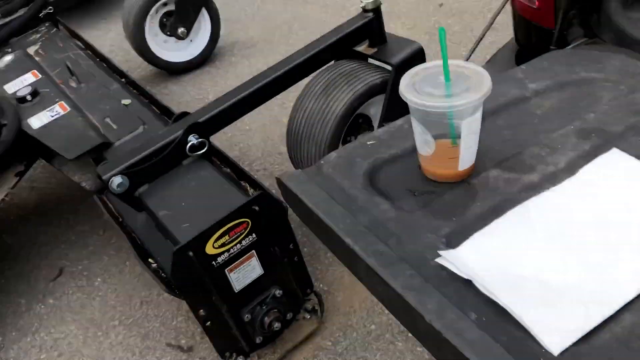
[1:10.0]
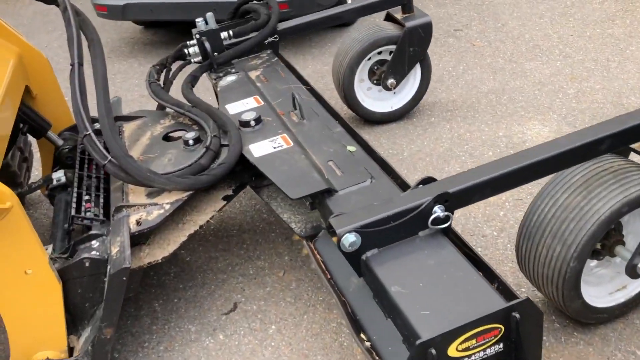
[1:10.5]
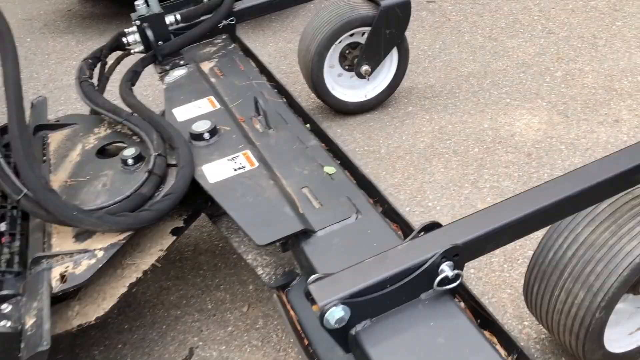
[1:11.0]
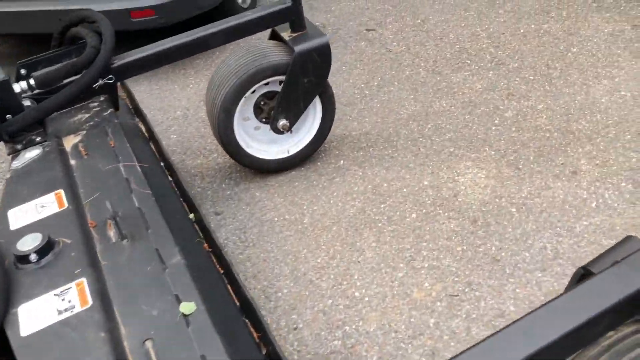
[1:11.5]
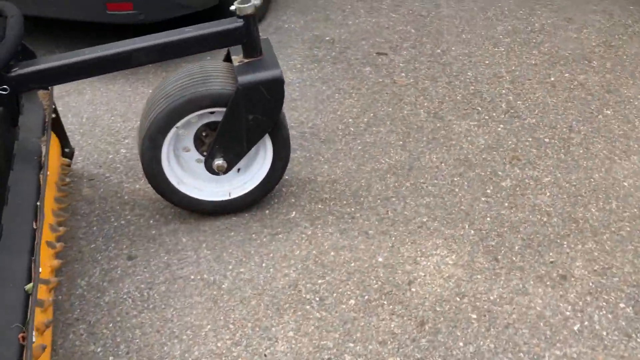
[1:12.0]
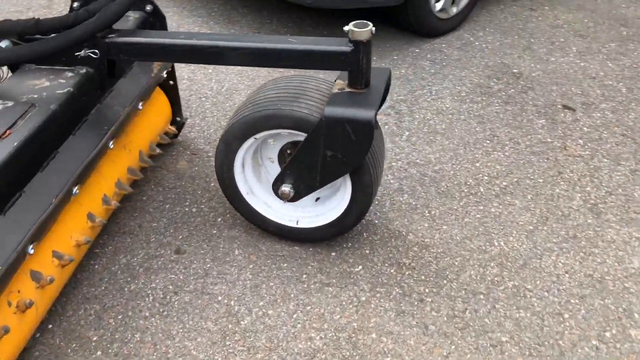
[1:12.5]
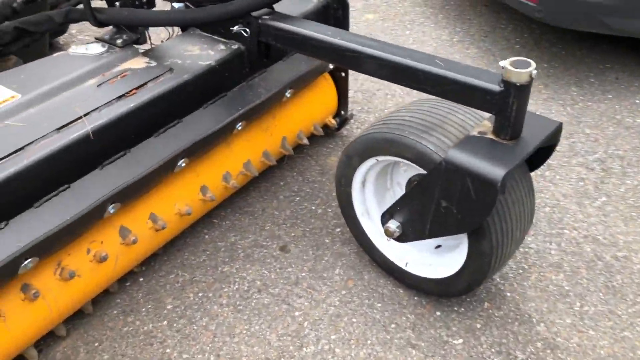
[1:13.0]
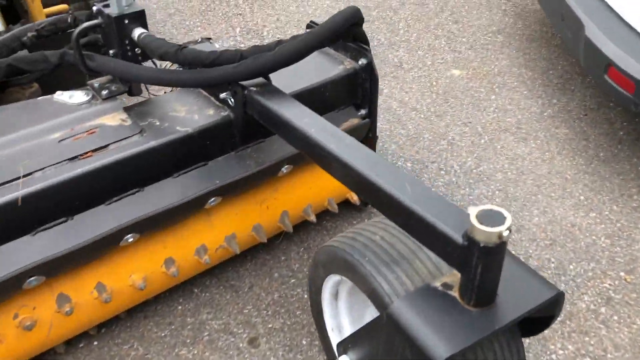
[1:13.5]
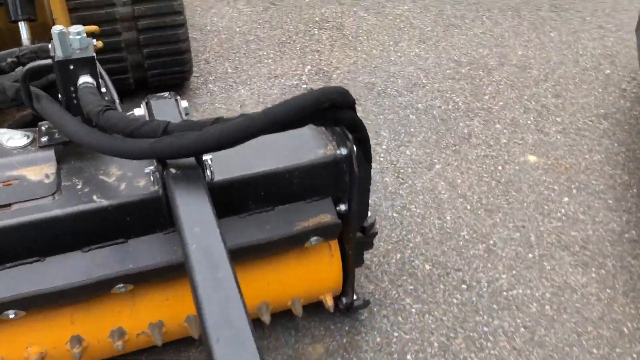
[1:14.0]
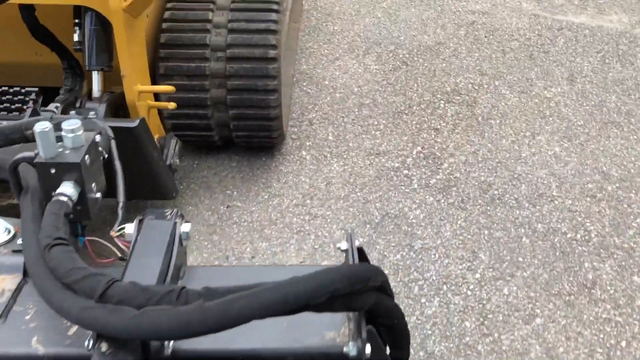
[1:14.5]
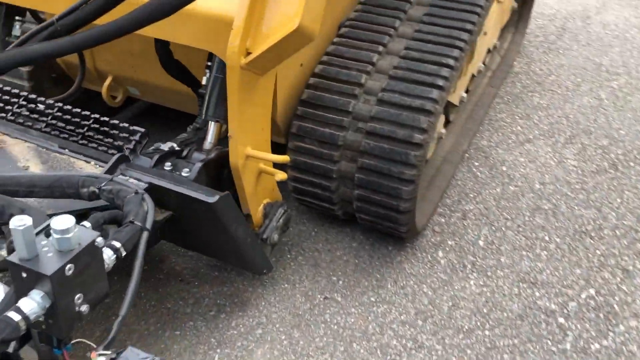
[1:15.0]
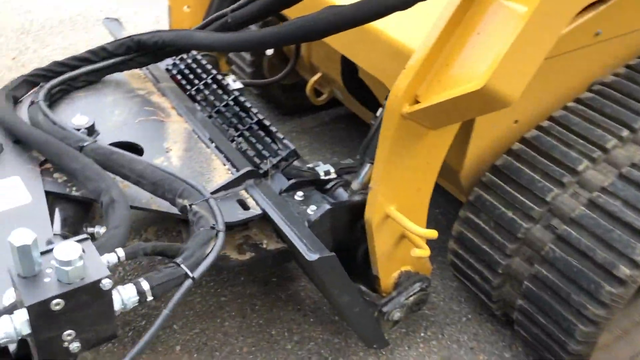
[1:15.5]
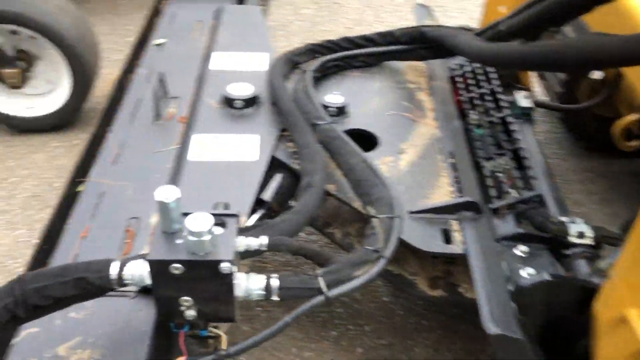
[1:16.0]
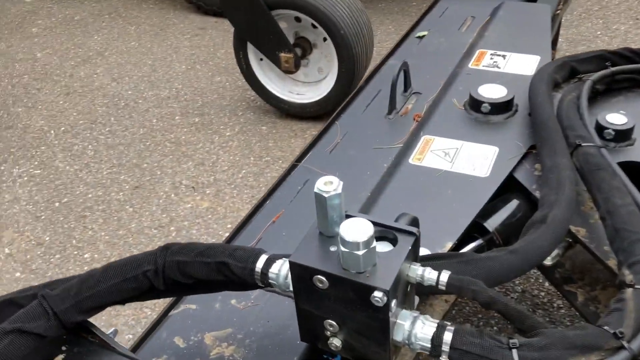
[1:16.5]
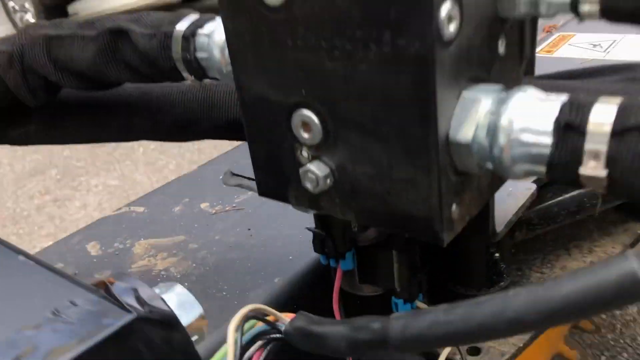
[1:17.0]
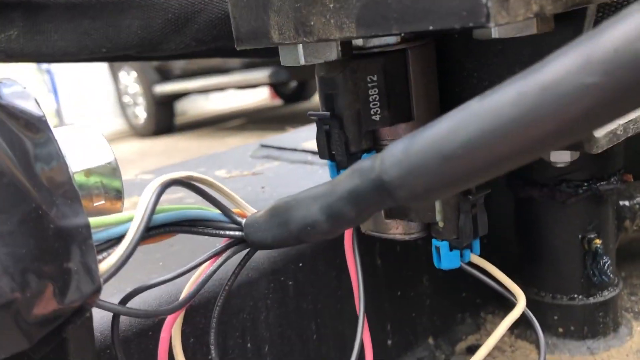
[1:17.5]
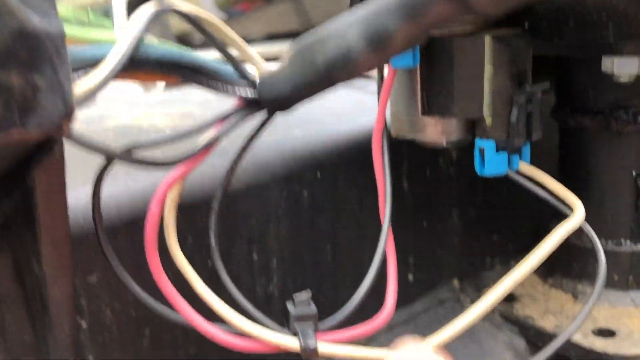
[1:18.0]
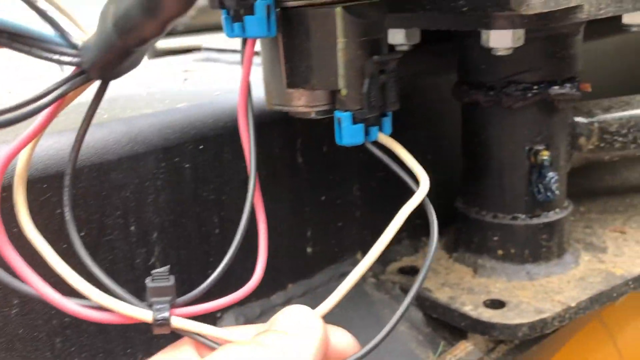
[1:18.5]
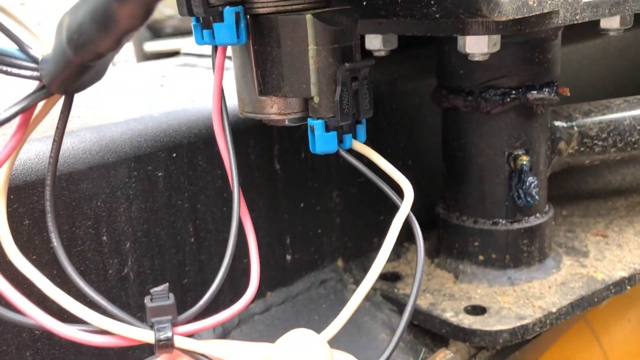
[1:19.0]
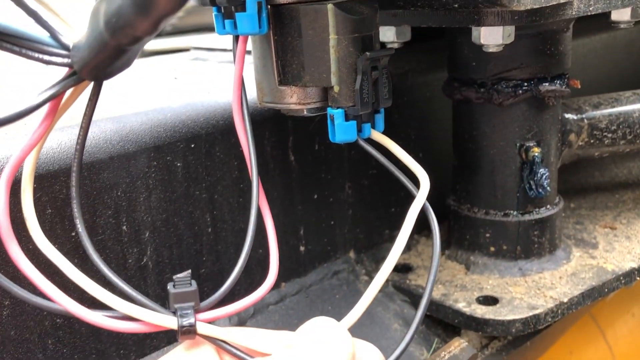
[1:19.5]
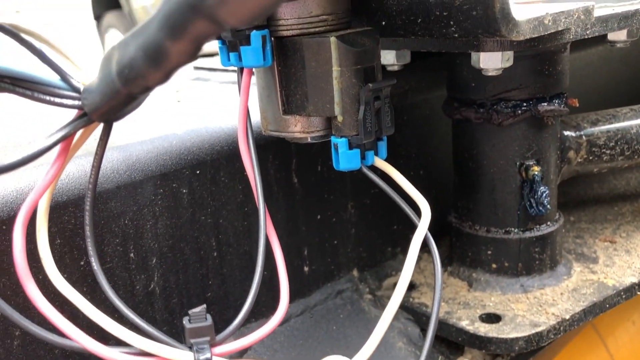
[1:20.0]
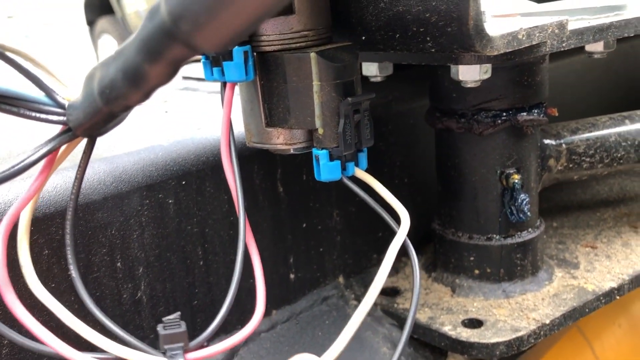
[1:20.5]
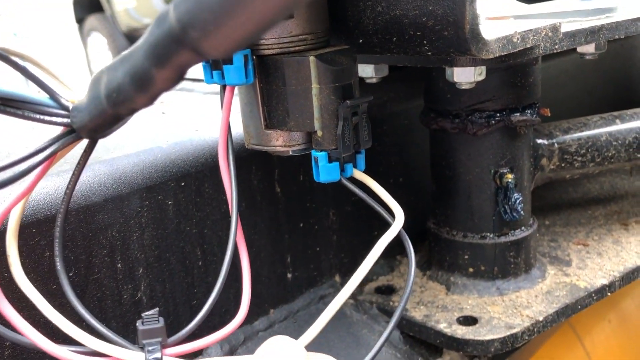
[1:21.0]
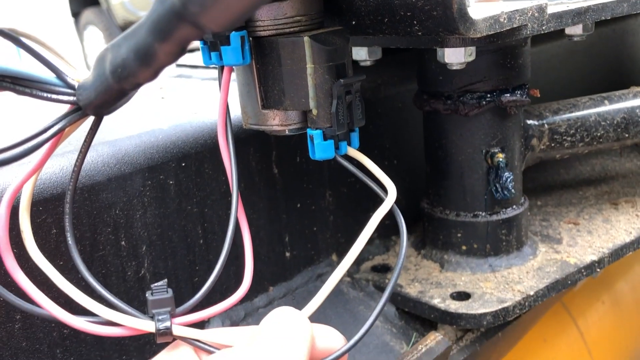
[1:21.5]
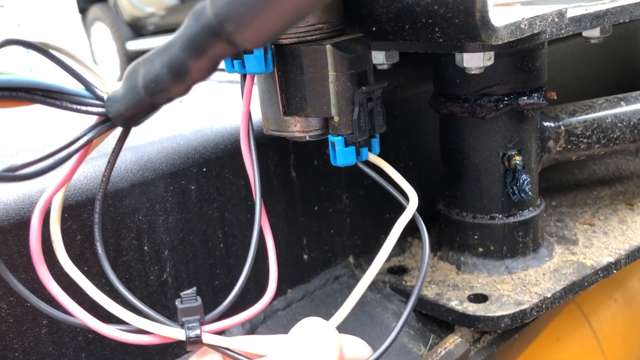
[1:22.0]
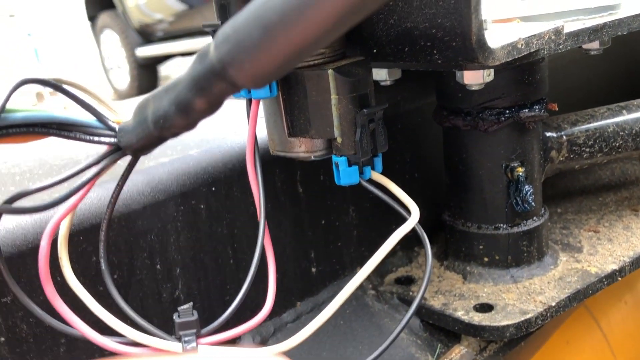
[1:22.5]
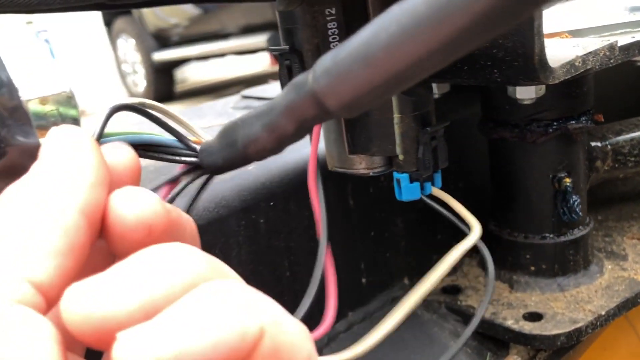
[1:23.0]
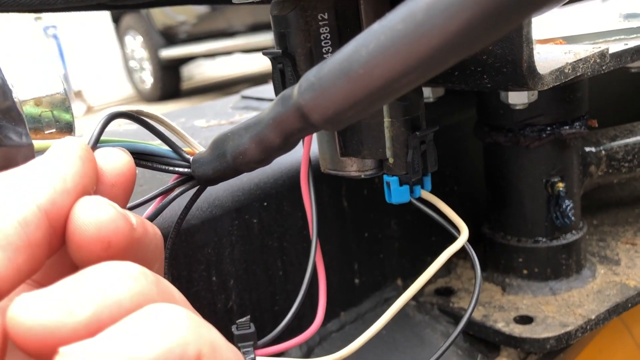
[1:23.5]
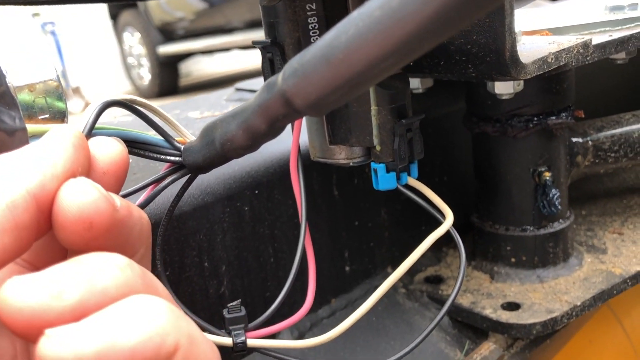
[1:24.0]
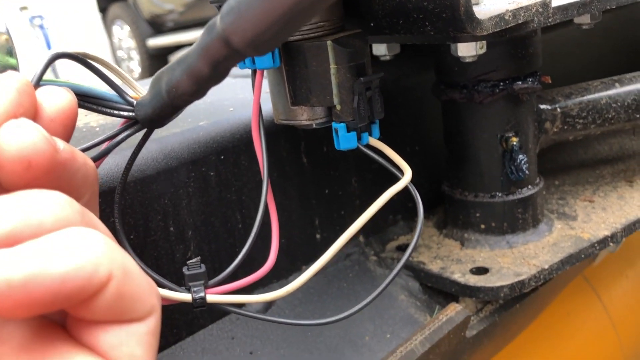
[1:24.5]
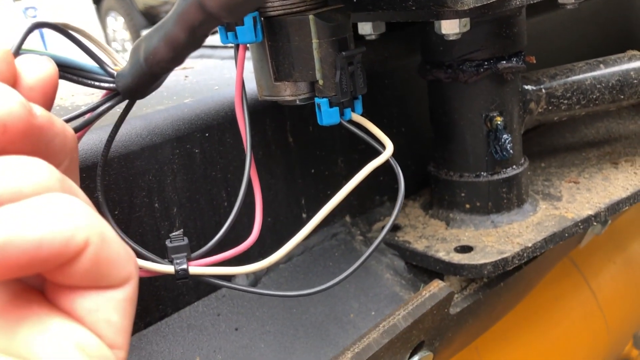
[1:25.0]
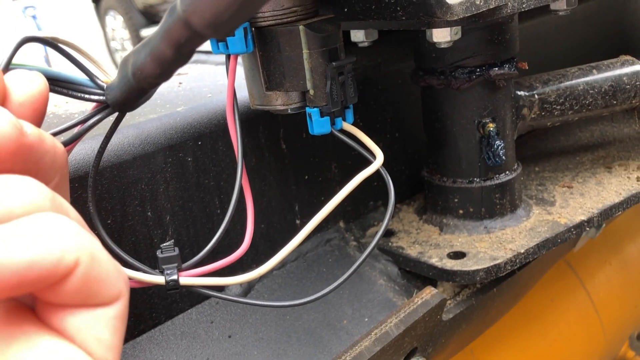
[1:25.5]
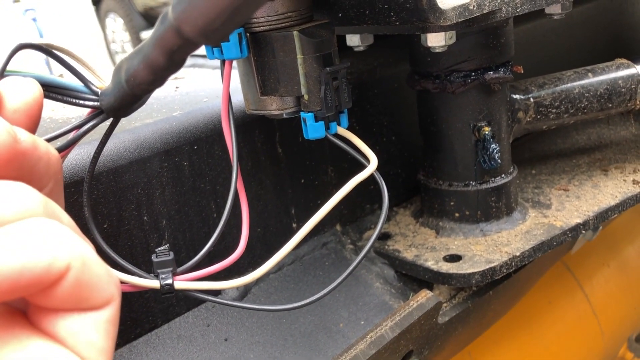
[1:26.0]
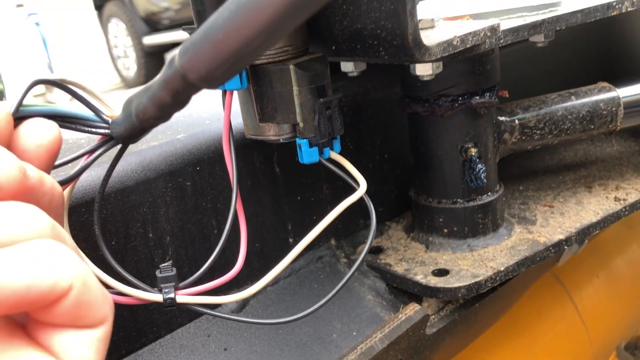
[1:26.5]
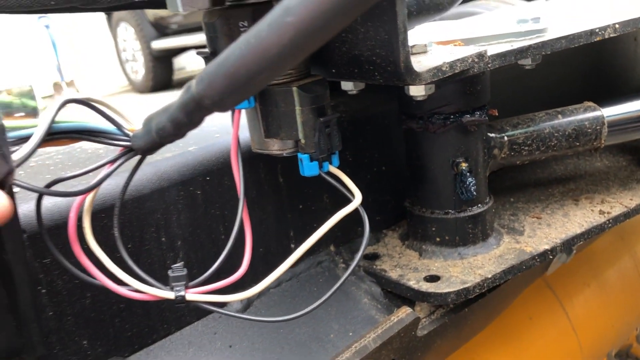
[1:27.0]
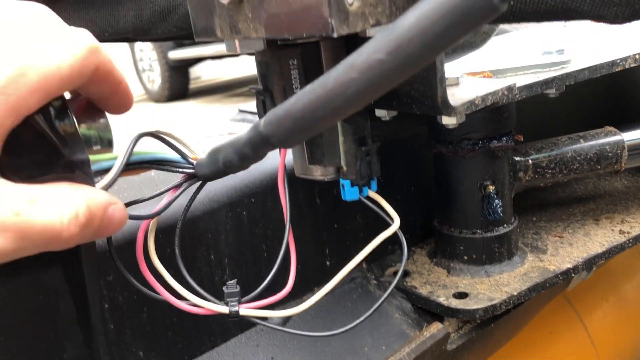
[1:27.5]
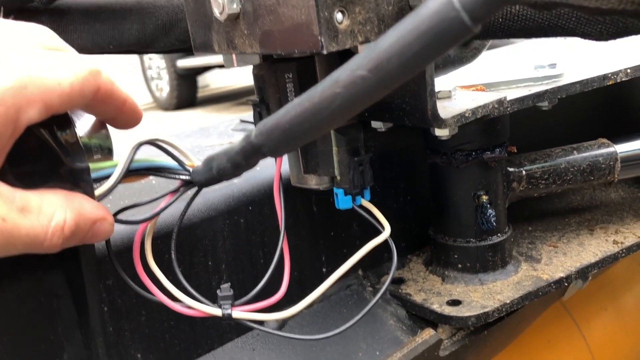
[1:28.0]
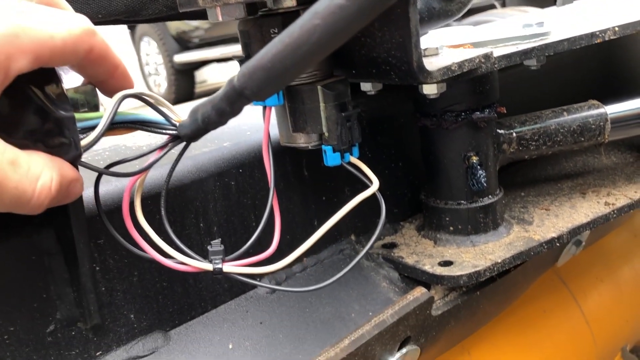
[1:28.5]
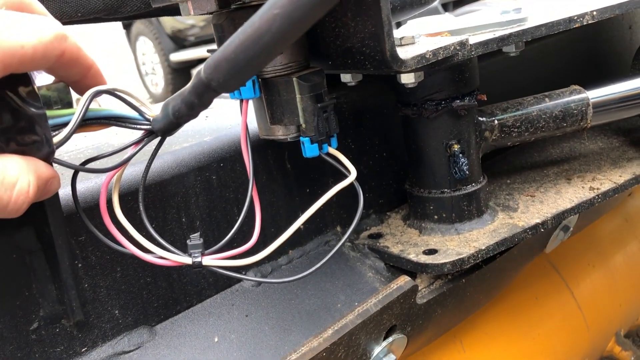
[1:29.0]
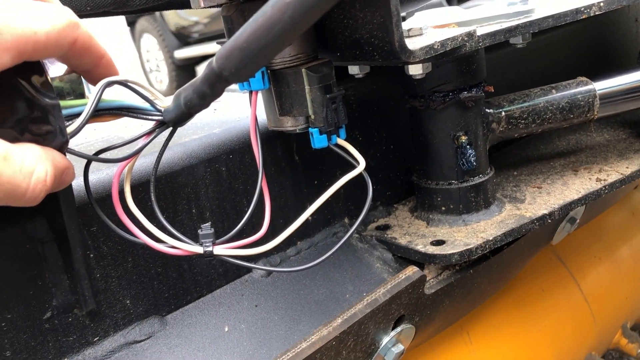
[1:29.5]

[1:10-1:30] The equipment is zoomed in, with a manual to check it, and an electrical connection cable is also zoomed in. Someone traces a particular wire, checking its strength, and makes adjustments to the wire's fittings. On the table is a tea-like drink with a straw and a brownish substance, with a piece of paper very close to it. The camera moves around the body of the vehicle, showing a red cable terminator and a blue cable terminator in the connection. Hands check the cables and the equipment, probably for repairs and usage.